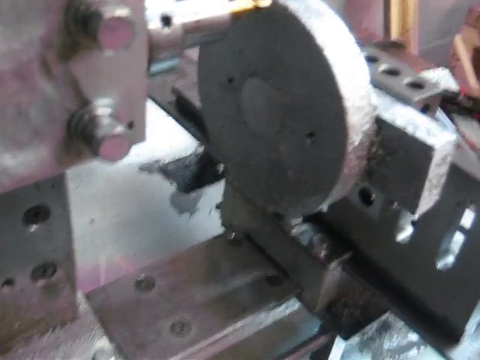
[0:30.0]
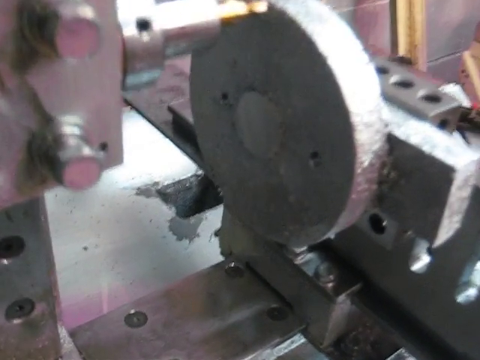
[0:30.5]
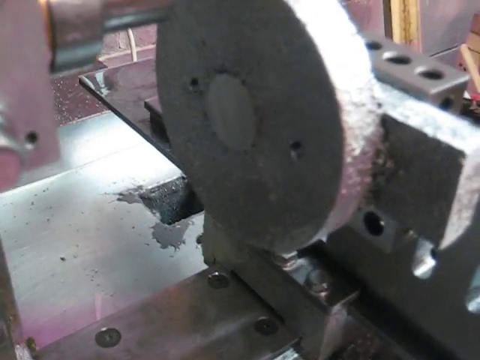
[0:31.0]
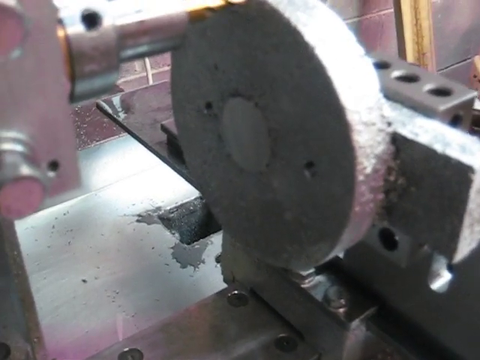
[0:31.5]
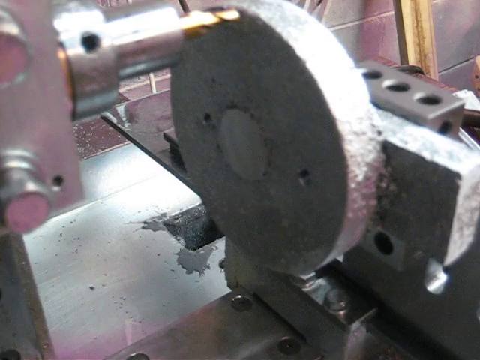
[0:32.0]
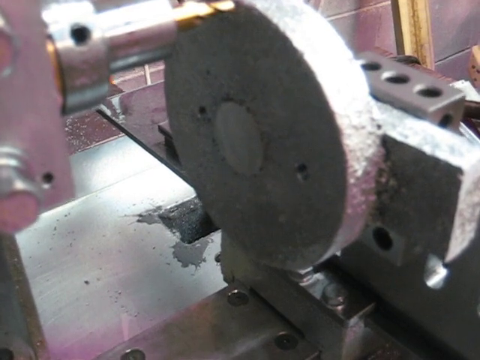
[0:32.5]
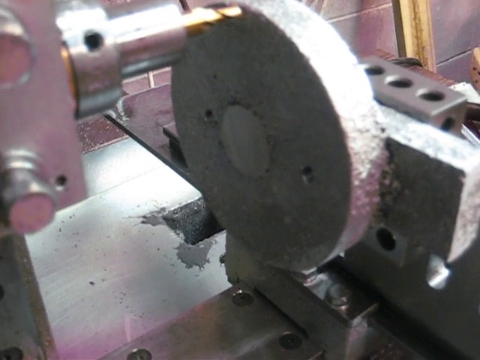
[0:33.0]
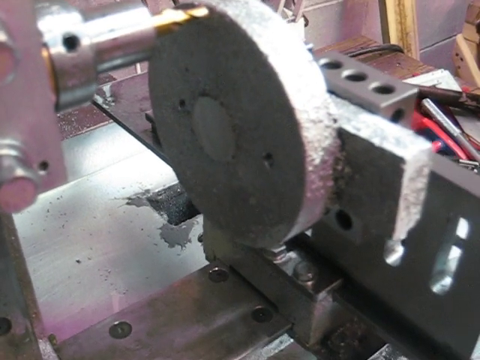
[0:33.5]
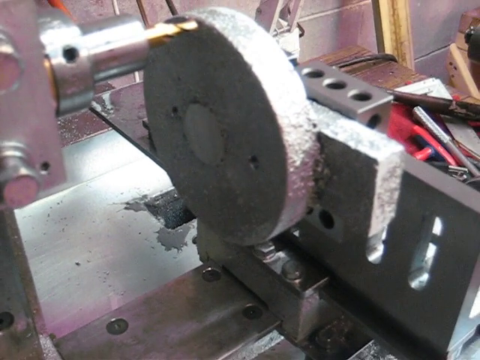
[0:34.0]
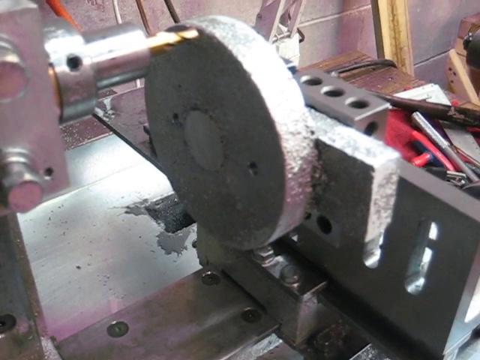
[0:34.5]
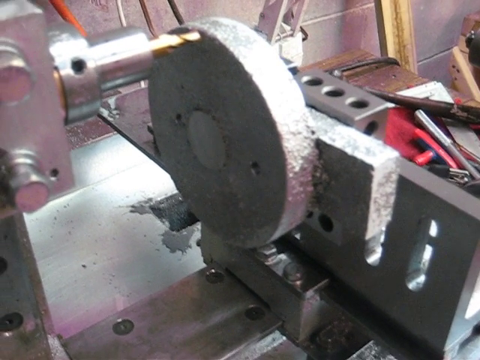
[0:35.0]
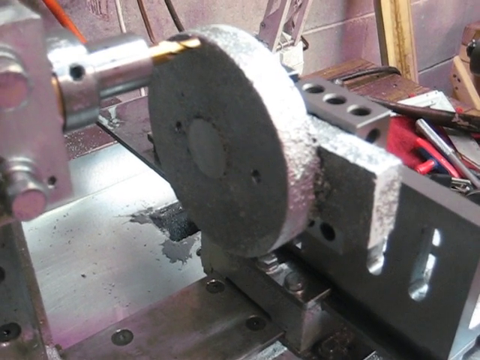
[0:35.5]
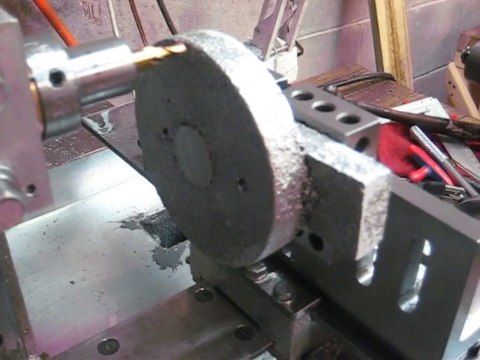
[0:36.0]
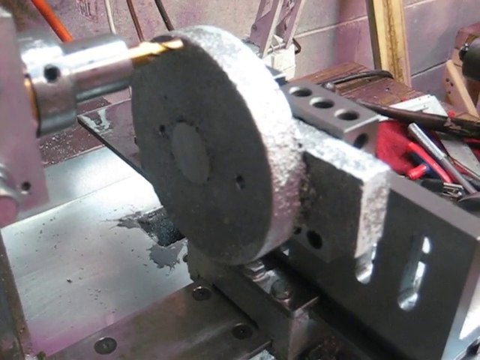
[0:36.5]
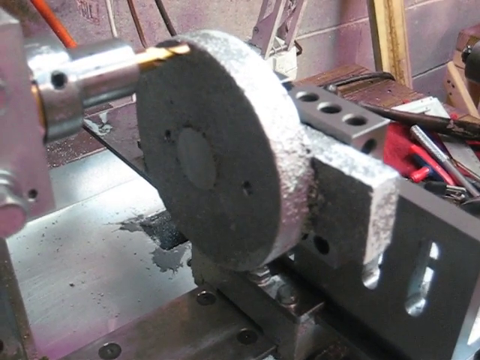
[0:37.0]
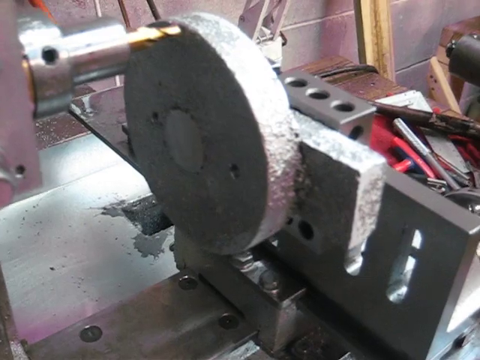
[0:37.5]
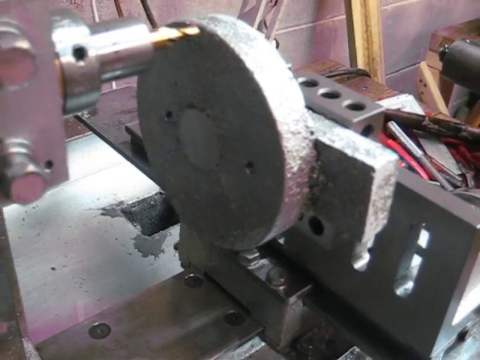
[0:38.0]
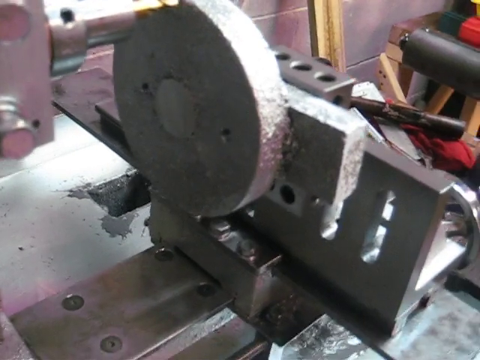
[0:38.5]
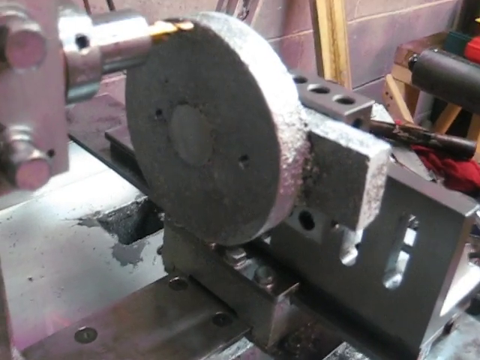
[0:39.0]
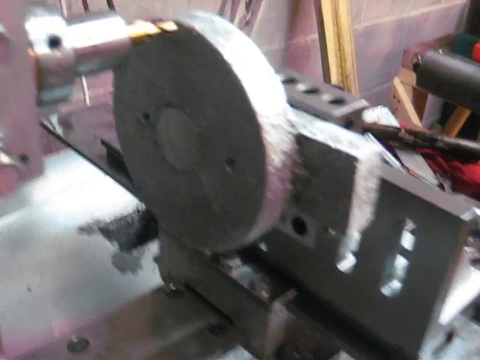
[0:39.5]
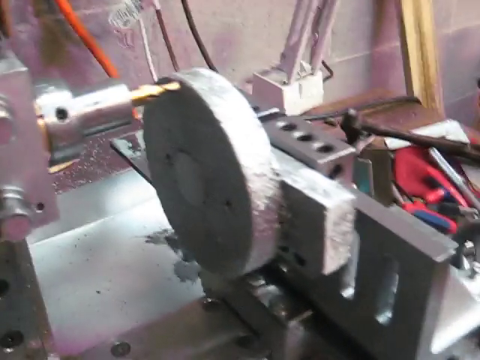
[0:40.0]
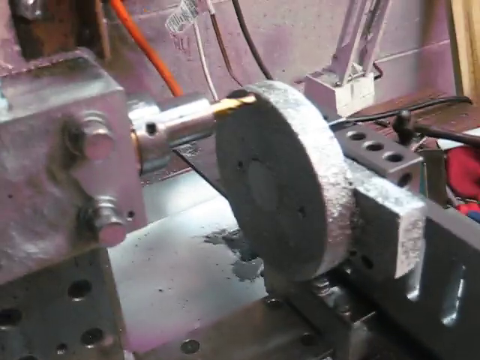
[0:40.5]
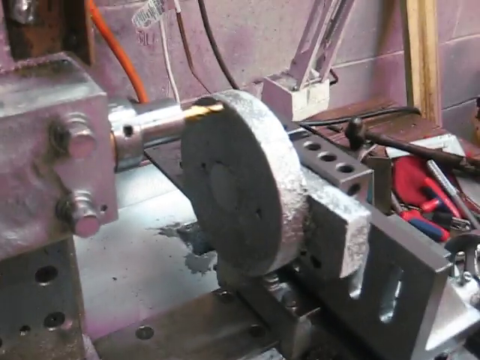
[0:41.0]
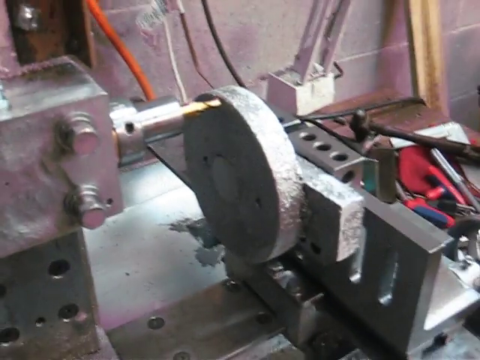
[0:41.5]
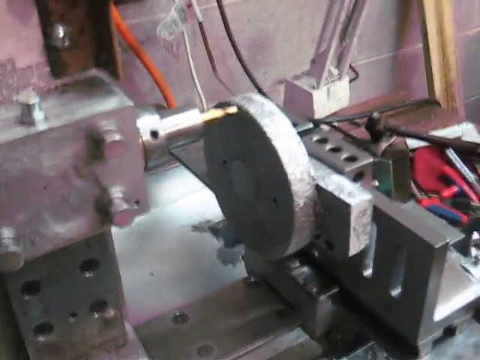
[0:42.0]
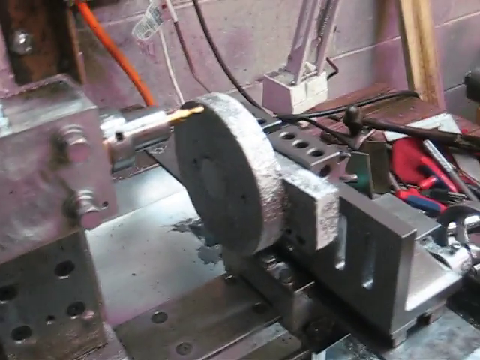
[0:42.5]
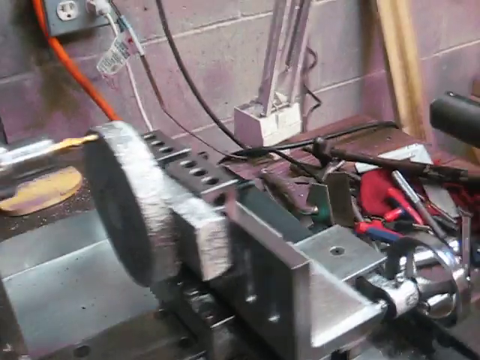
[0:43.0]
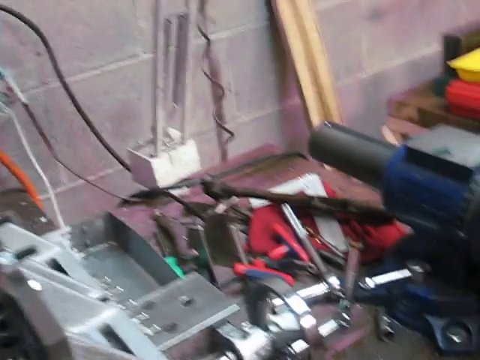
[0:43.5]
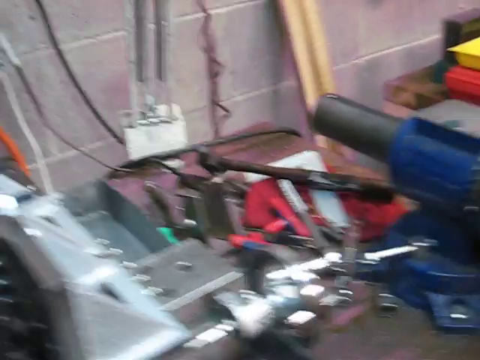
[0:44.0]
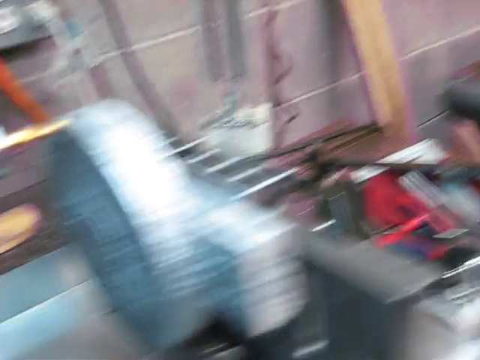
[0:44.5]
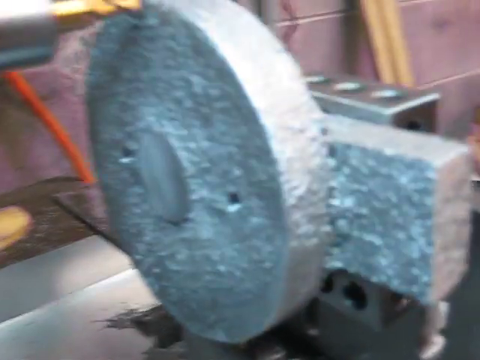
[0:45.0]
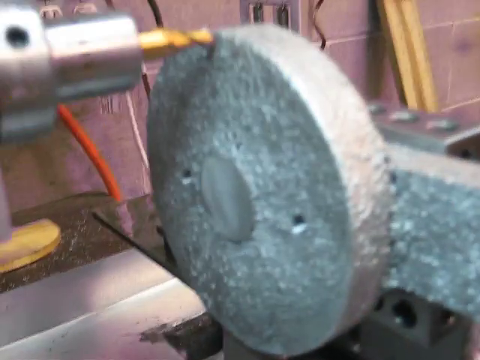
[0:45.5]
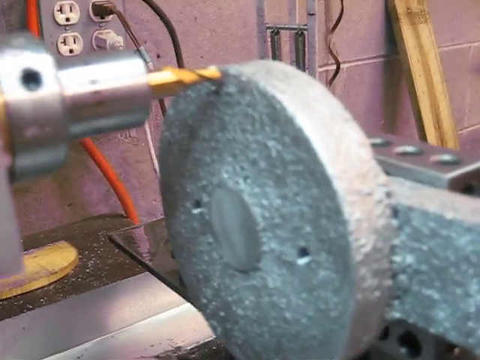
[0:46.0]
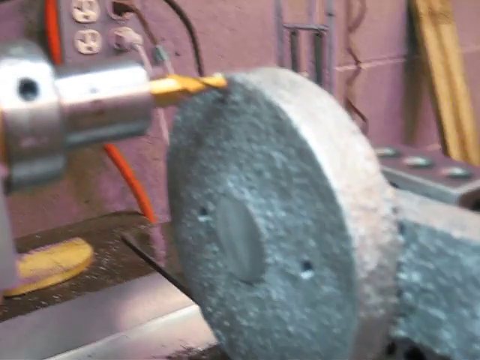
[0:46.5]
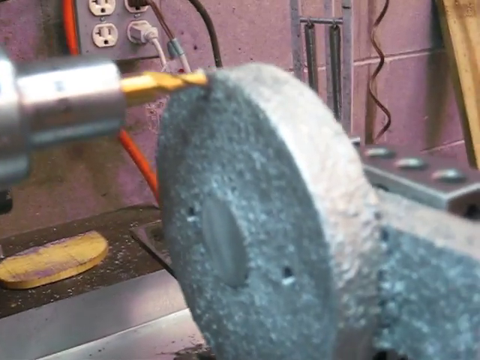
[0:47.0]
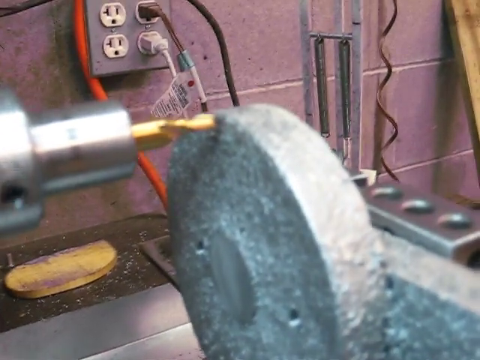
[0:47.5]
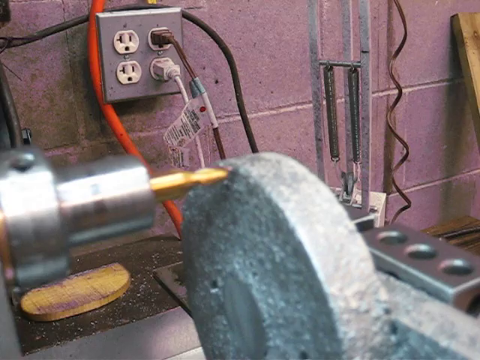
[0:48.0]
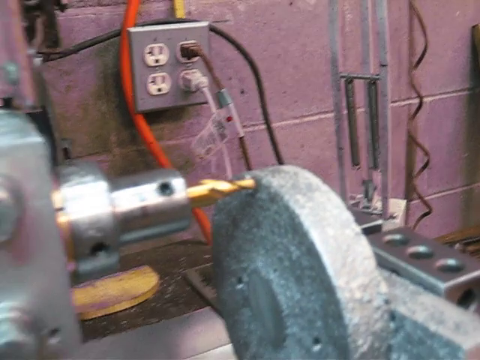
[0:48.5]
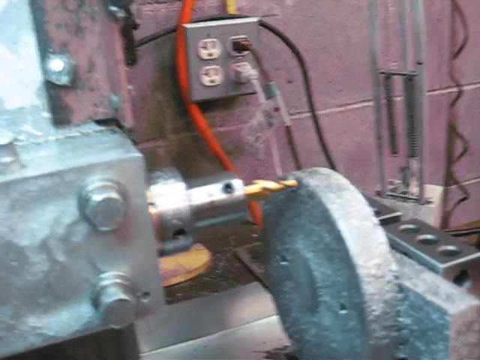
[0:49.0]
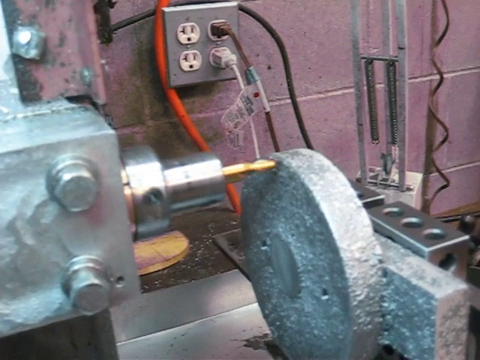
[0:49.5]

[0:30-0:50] What appears to be a drill in some kind of machine shop is seen in close-up. The drill has a kind of gold color and is attached to another compartment that seems to hold it locked in place. To its right is a round clamp attached to more metal. The whole machine looks kind of silver, with many thick square parts and bolts everywhere. Where the drill is, four giant bolts are attached to a rectangular piece of metal, which is attached to what seems to be a wooden frame. The camera cuts to the right, showing many metal tools on a bench, then cuts back to a close-up of the clamp and the drill. The clamp is round and very thick, and in the background is an outlet with two plugs plugged in and the other two outlets empty.